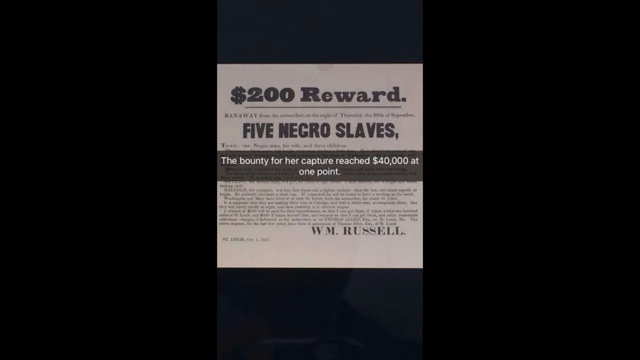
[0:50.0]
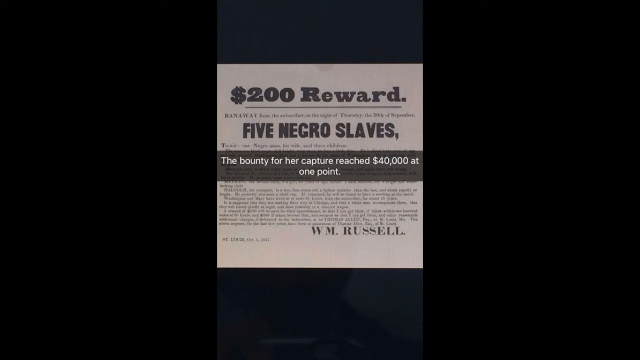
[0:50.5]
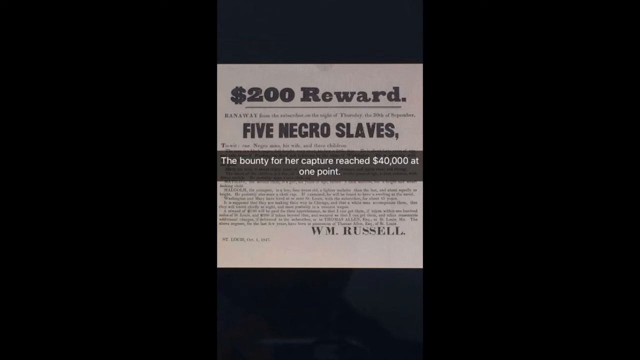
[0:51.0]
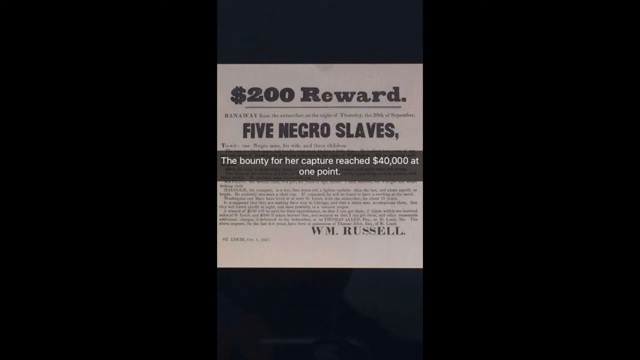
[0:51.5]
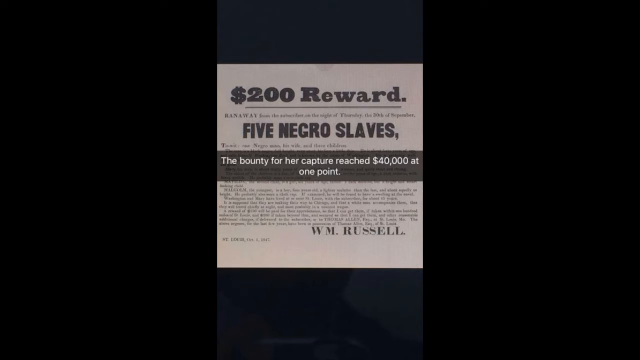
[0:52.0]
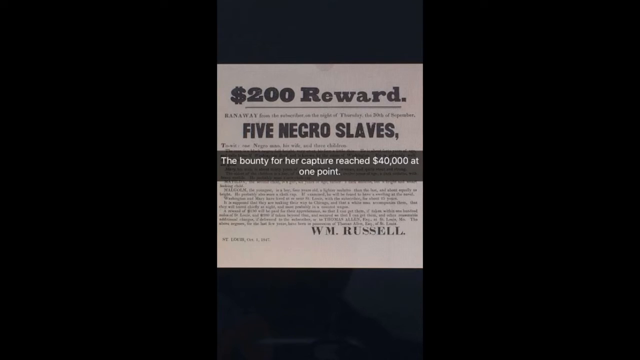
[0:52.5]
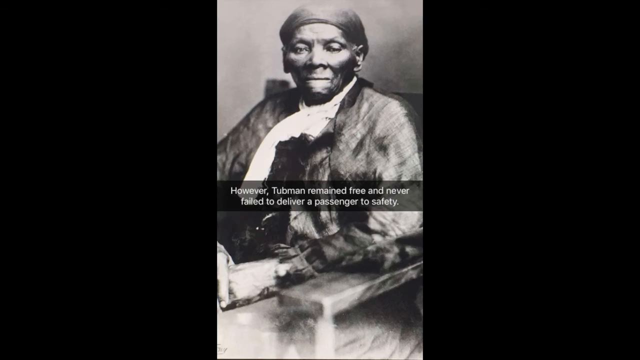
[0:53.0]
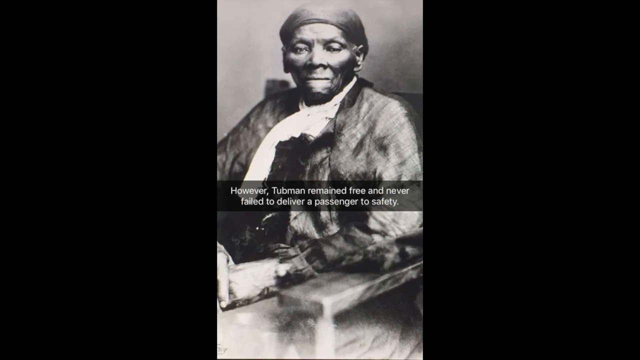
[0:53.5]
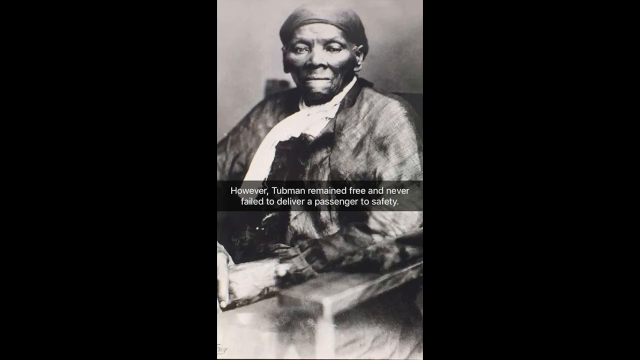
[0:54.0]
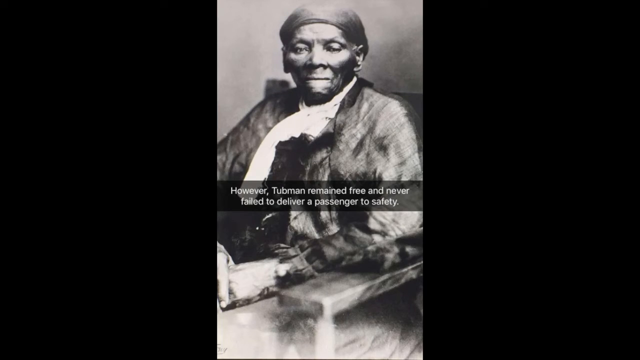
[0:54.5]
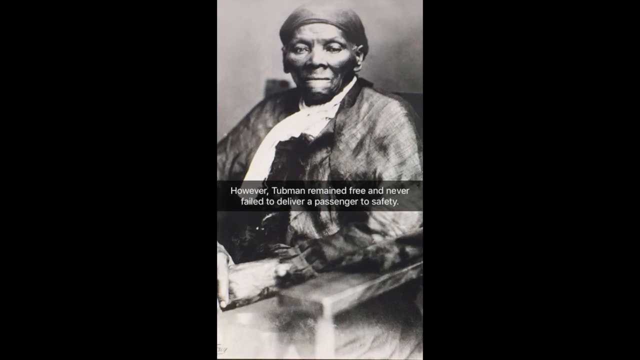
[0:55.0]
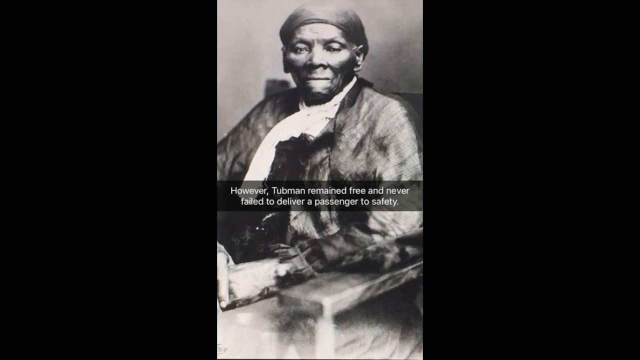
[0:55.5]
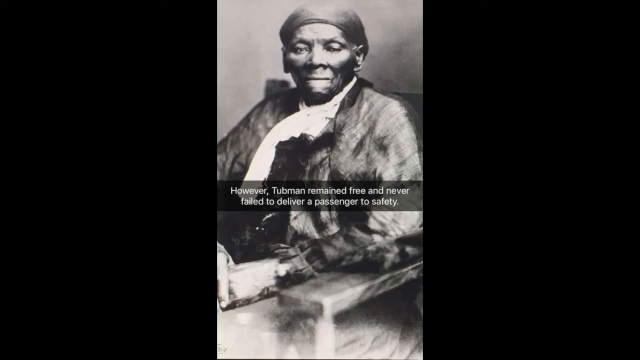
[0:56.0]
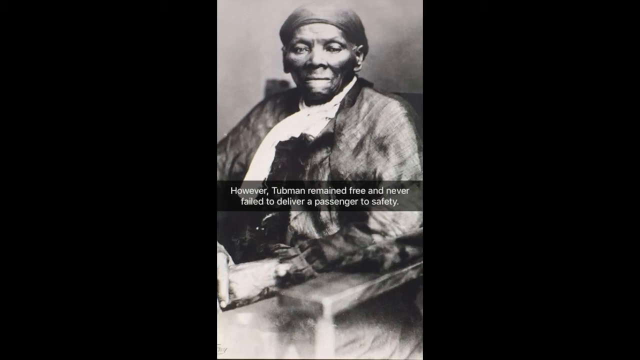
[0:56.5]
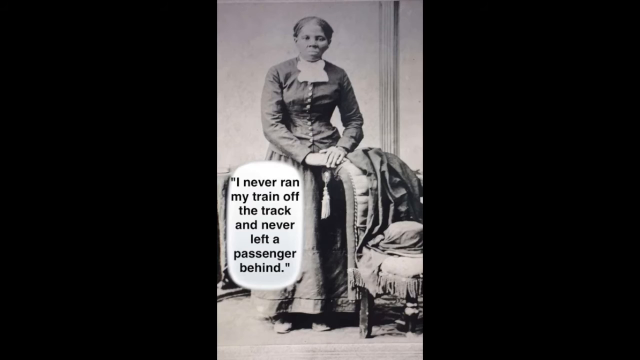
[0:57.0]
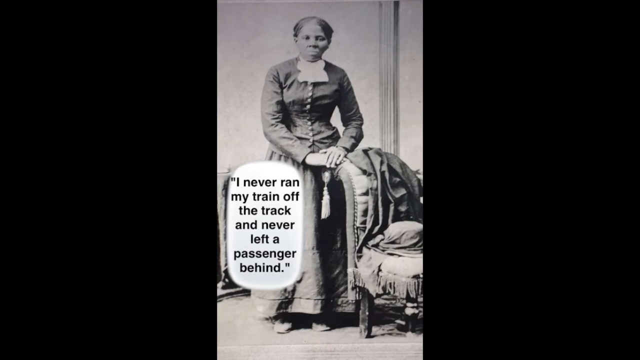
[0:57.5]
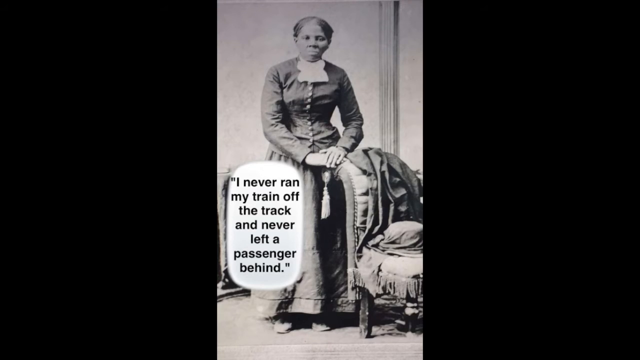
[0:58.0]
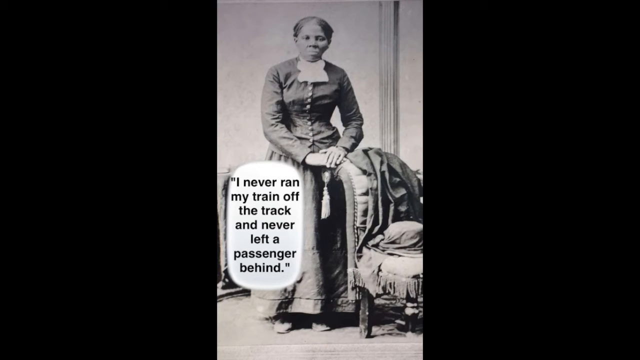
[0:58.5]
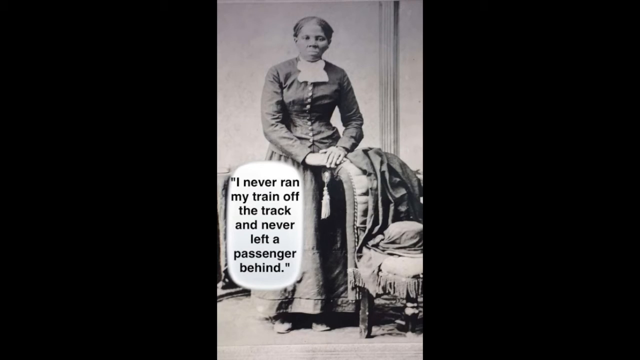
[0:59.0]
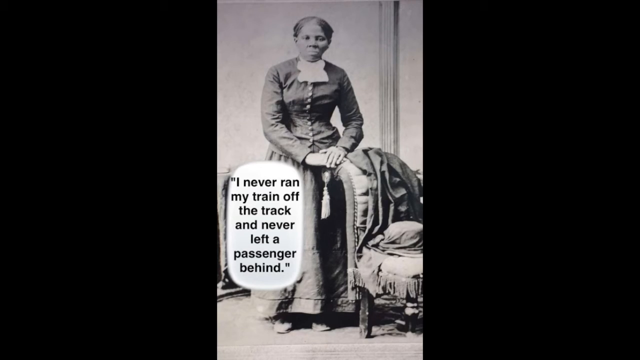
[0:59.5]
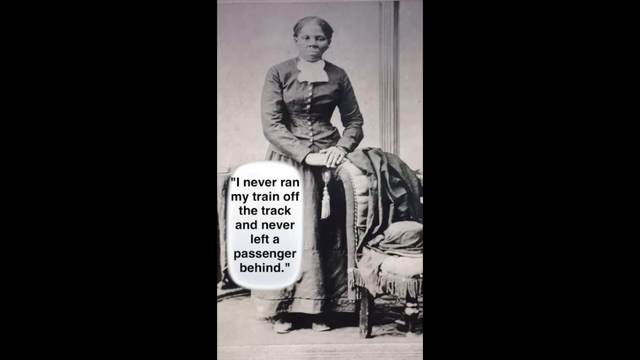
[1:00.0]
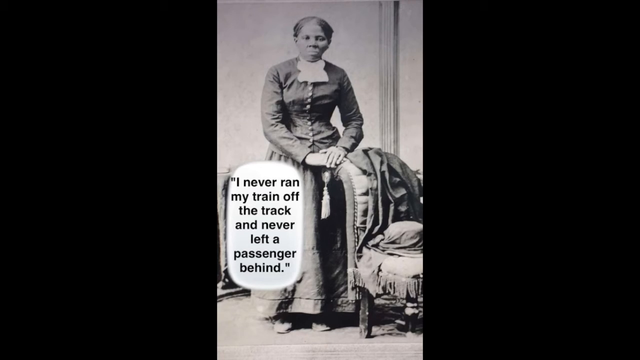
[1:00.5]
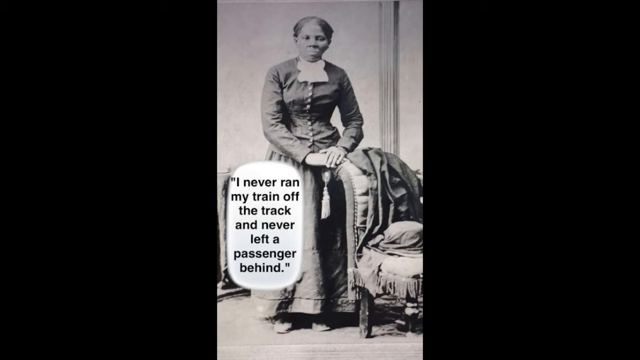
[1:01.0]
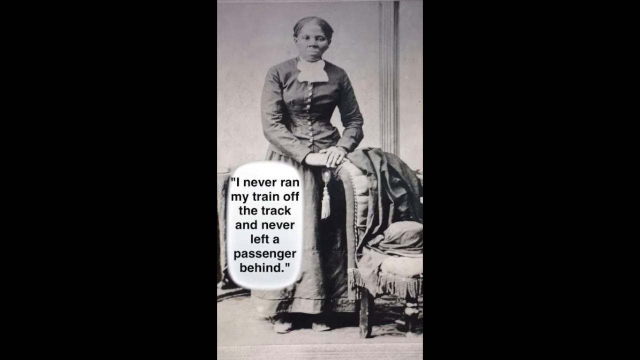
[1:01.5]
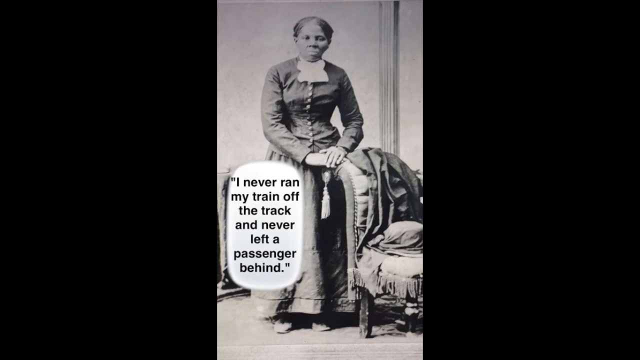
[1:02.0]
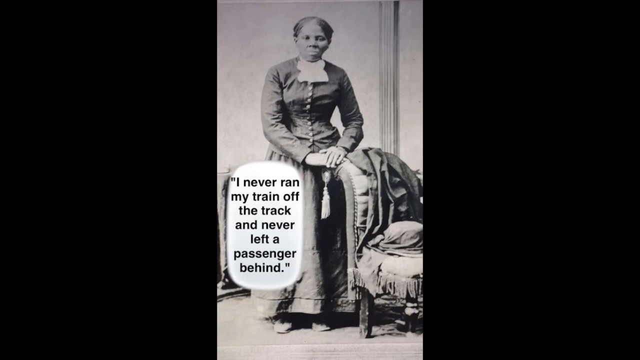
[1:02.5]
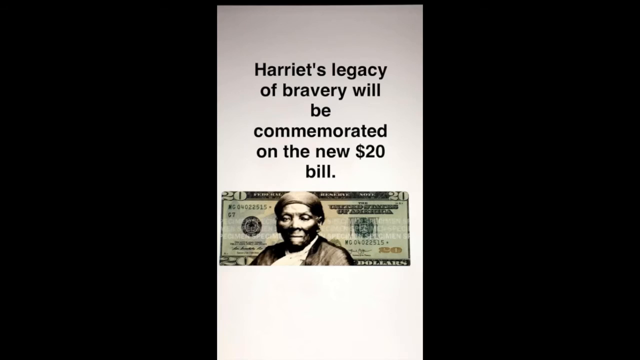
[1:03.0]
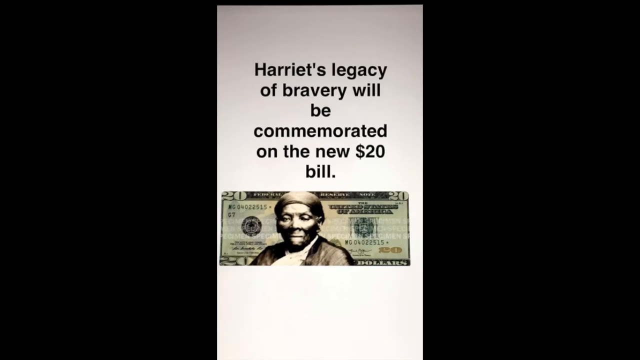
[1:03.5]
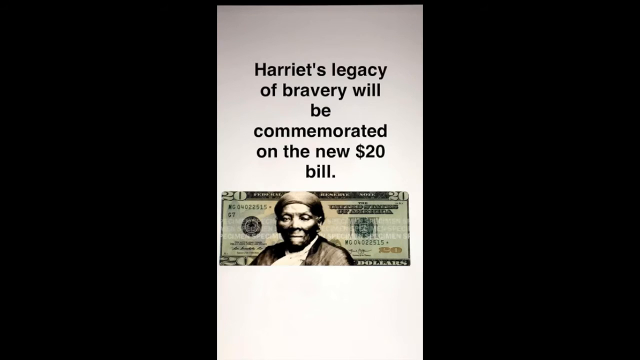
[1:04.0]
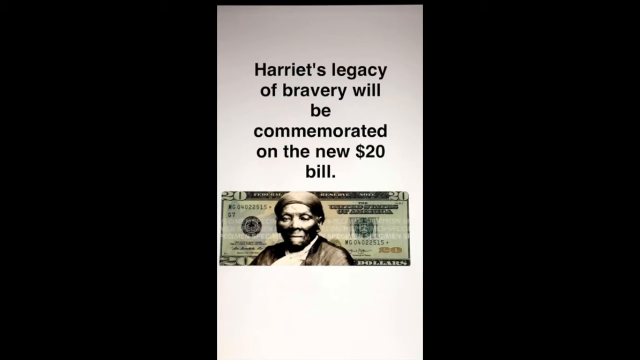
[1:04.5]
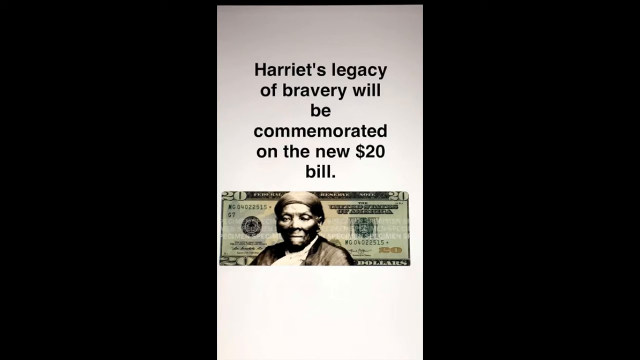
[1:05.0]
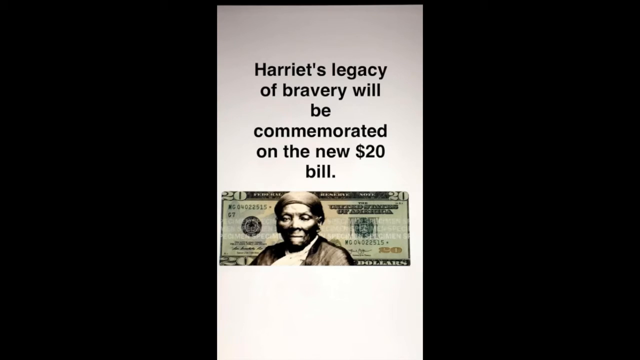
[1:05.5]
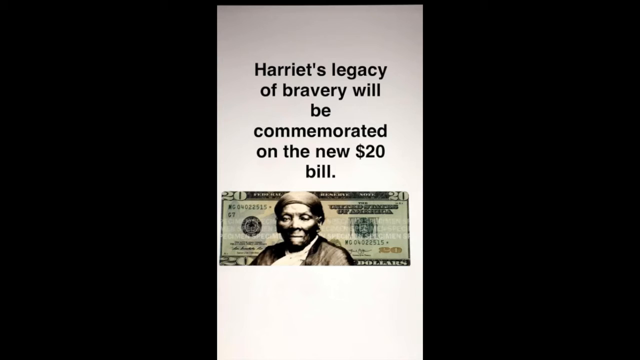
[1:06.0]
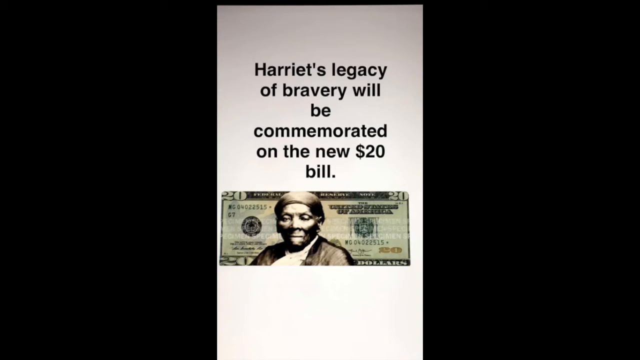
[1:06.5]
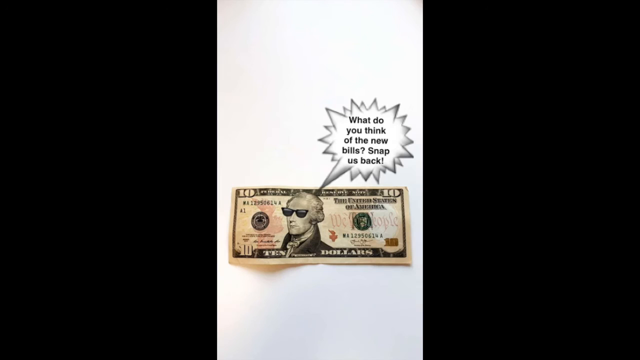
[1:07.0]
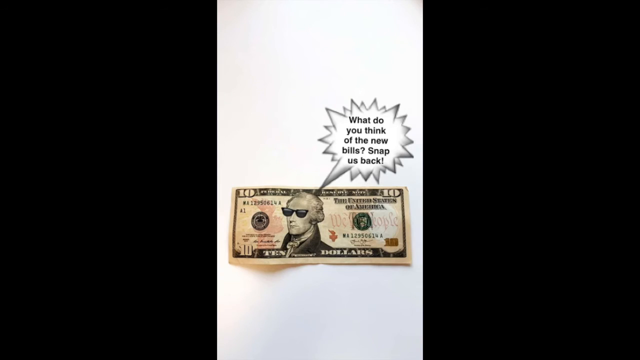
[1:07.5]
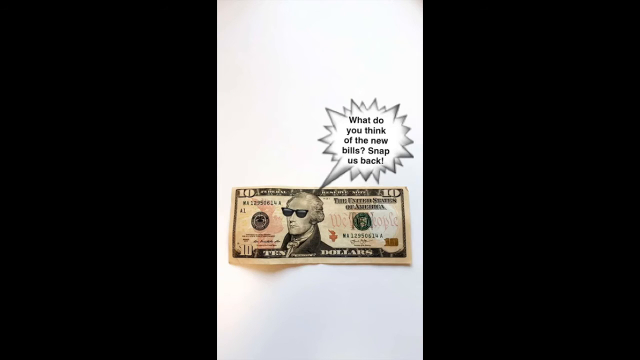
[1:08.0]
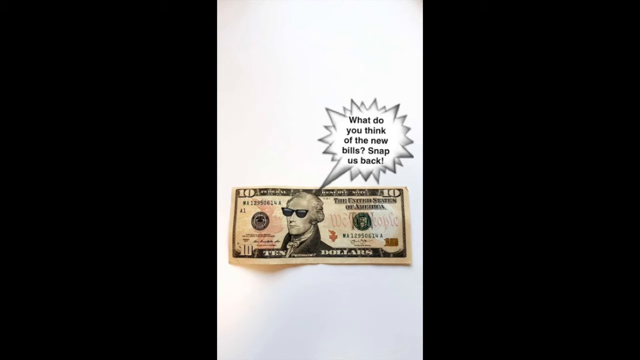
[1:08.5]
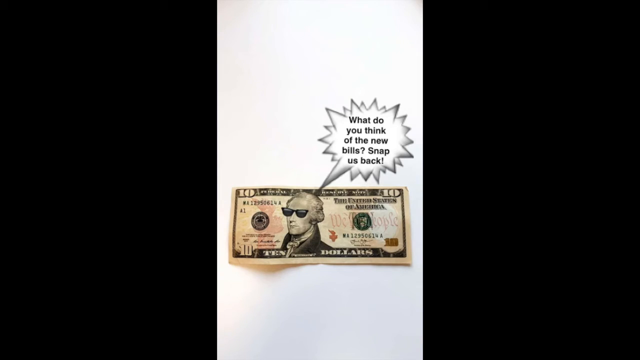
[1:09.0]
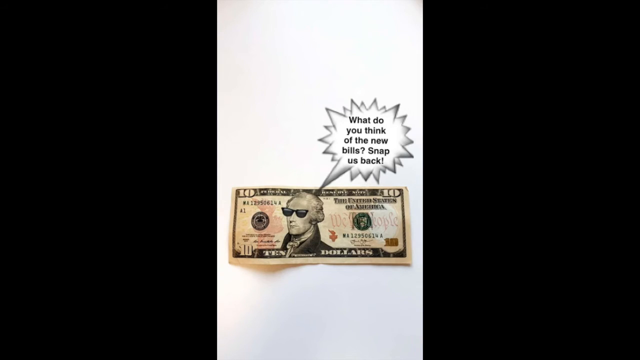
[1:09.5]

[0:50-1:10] An old newspaper section is shown. Its top part reads "$200 reward," followed by a black separating line and some text too small to read. The only other readable part says "five Negro slaves." In the bottom right it says "W. M. Russell," probably the author. Text in the center reads "the bounty for a capture reached $40,000 at one point." The view switches to an image of a much older Tubman sitting by her table; she seems to have a book in her hand. She wears black robes with a white scarf and a black rag over her head. Another black bar with text says "however, Tubman remained free and never failed to deliver a passenger to safety." Another picture follows, a more zoomed-out version of the first picture of her, showing her full body. She is sort of standing by a carriage with cloth over it; it looks like a big carriage back. A quote from her on the left side of her leg says "I never ran my train off the track and never left a passenger behind."